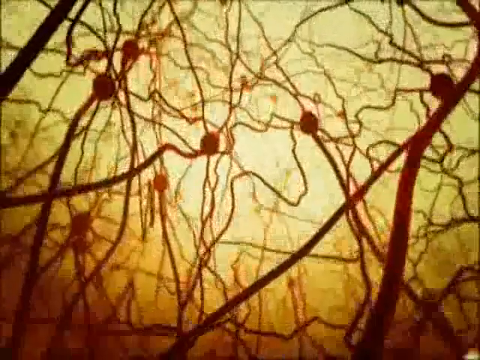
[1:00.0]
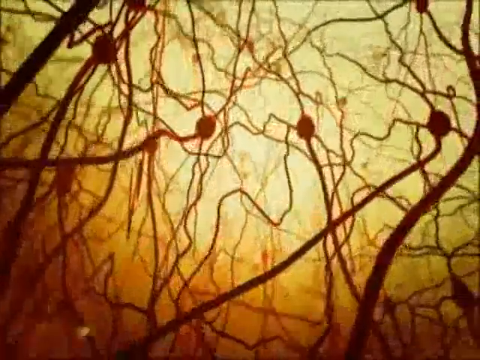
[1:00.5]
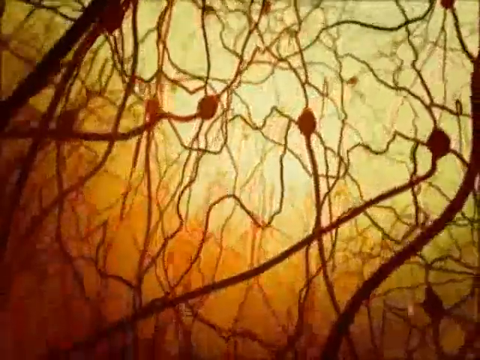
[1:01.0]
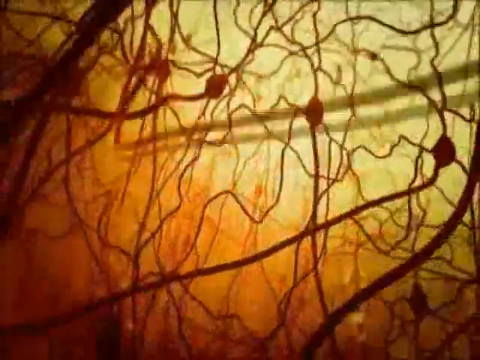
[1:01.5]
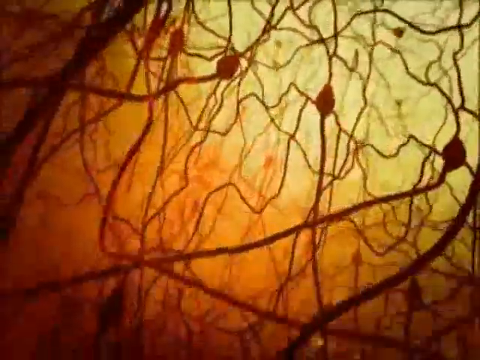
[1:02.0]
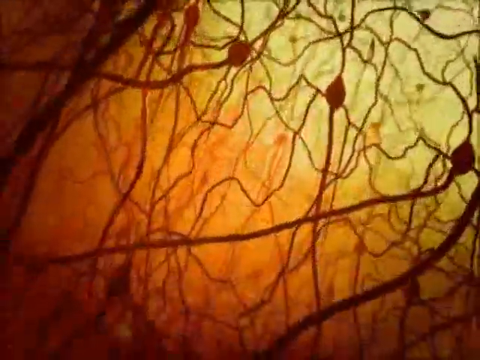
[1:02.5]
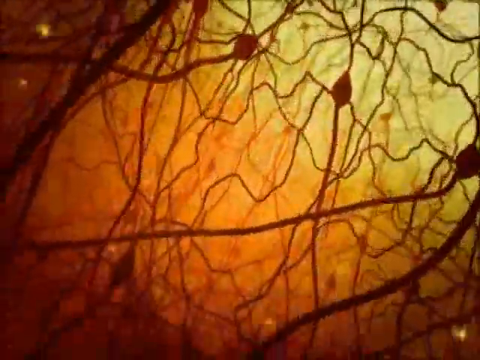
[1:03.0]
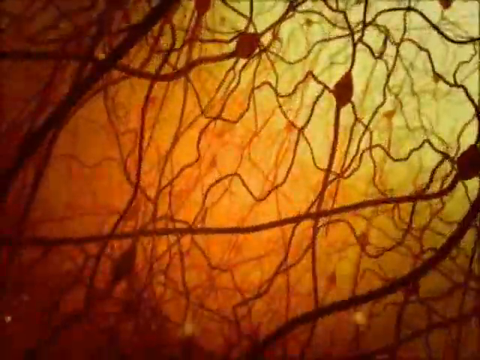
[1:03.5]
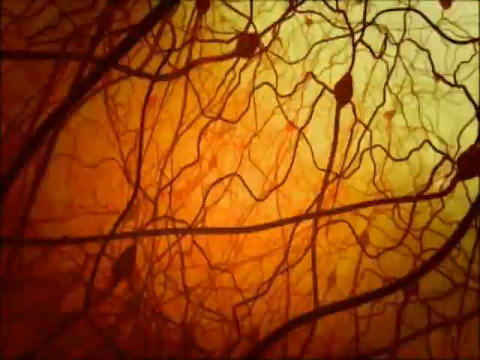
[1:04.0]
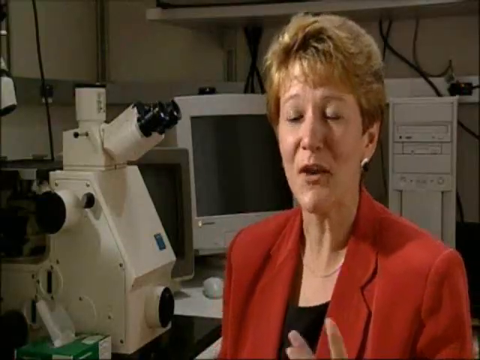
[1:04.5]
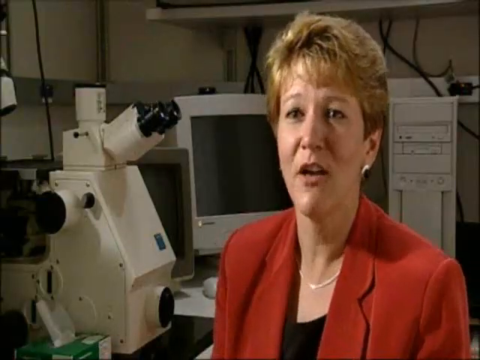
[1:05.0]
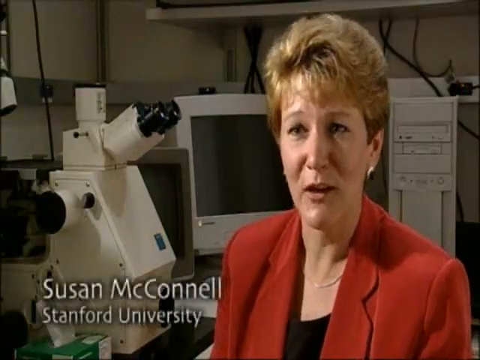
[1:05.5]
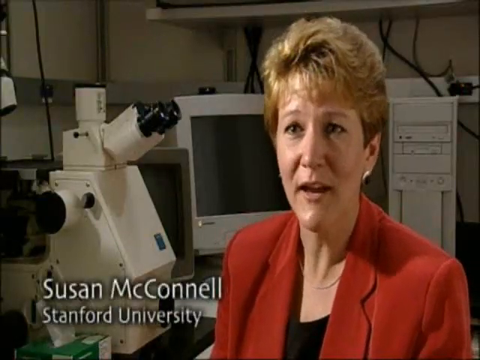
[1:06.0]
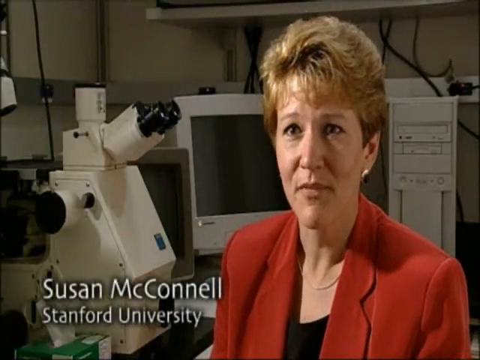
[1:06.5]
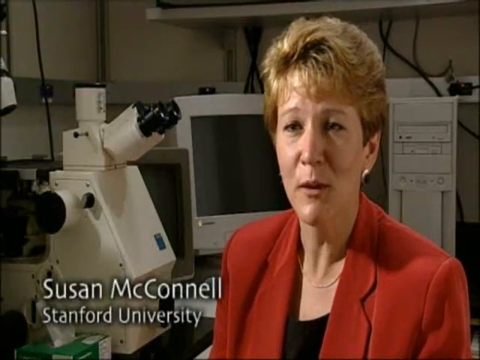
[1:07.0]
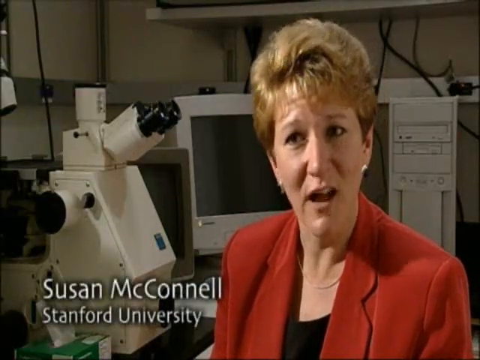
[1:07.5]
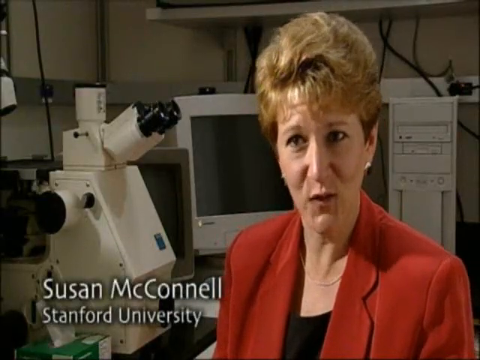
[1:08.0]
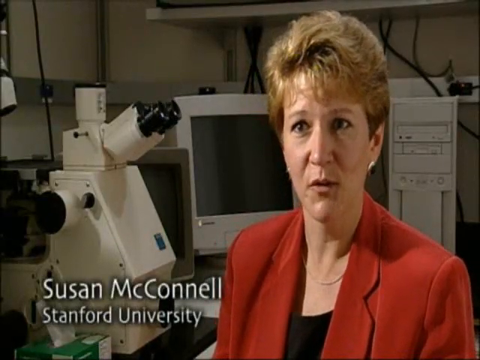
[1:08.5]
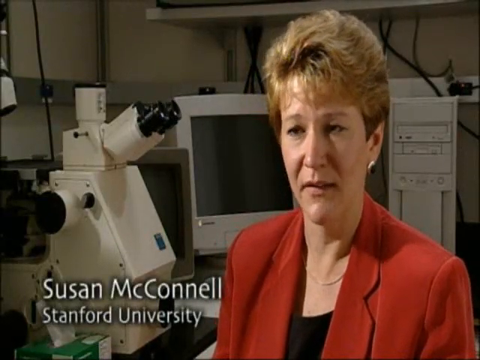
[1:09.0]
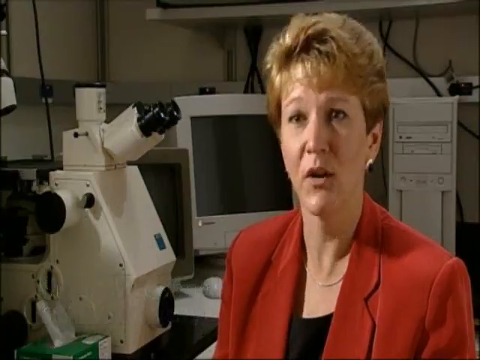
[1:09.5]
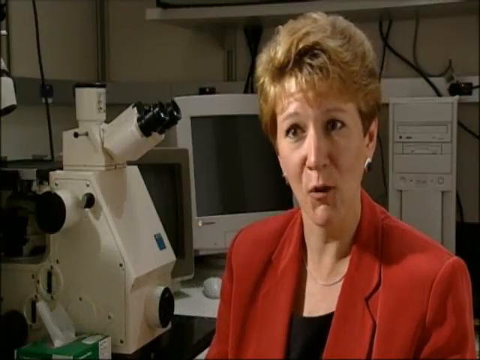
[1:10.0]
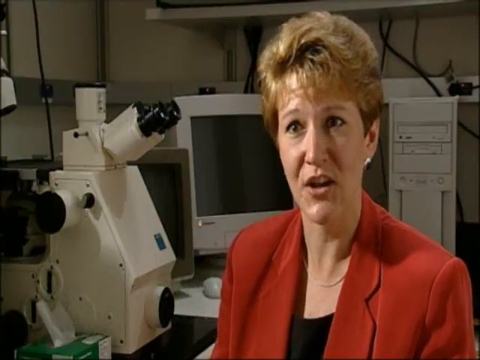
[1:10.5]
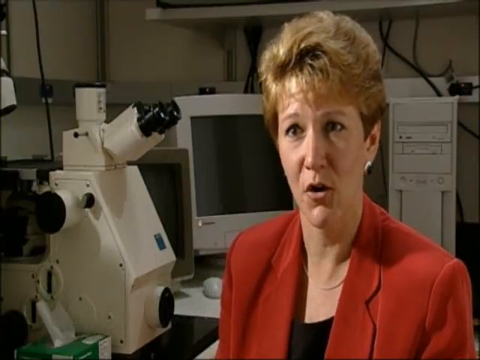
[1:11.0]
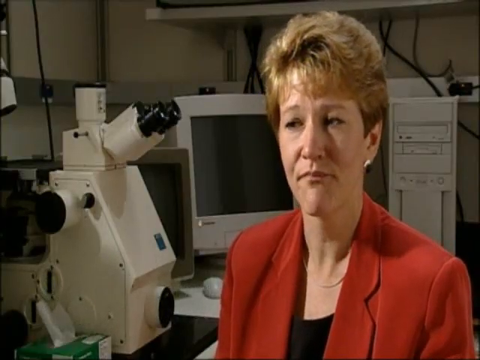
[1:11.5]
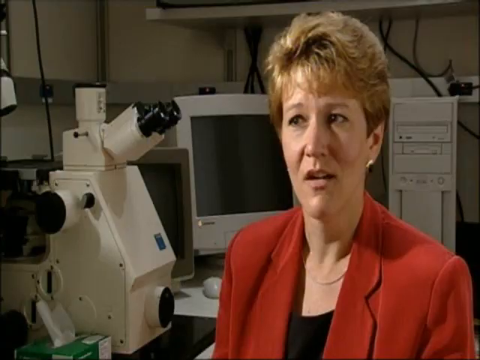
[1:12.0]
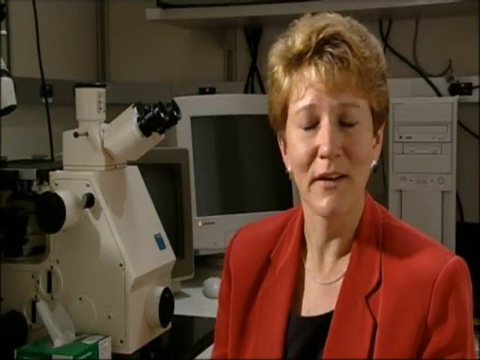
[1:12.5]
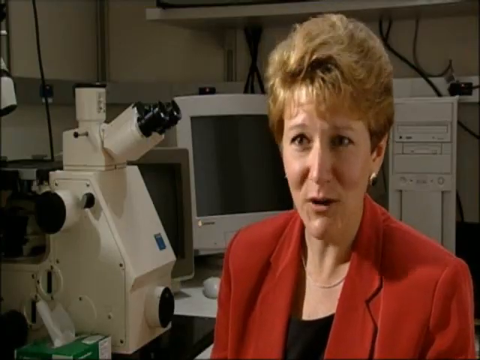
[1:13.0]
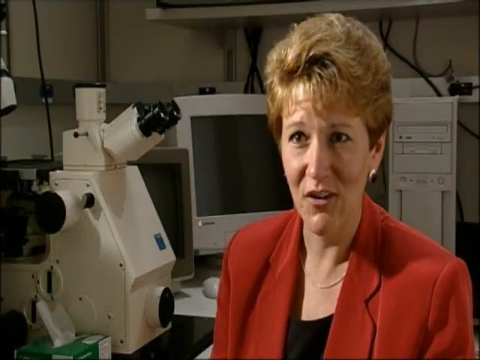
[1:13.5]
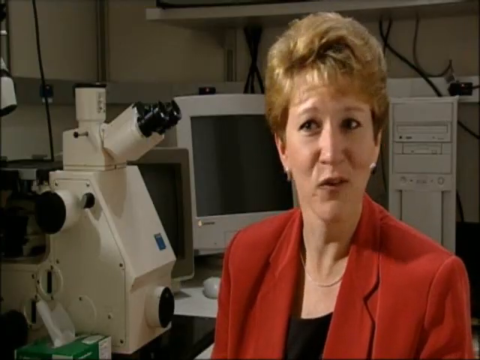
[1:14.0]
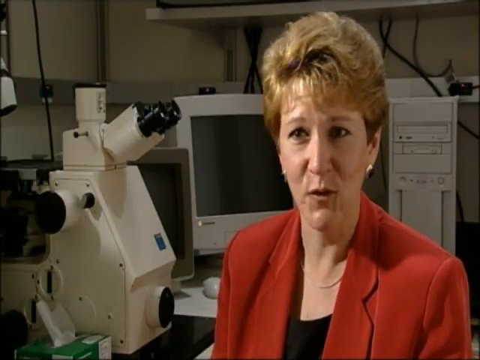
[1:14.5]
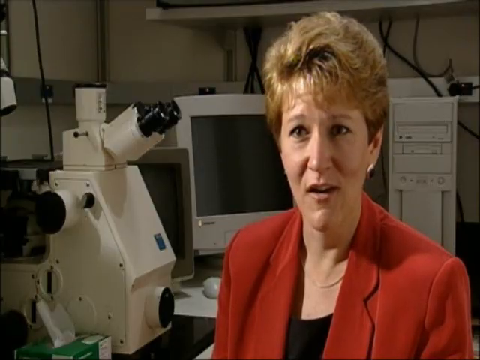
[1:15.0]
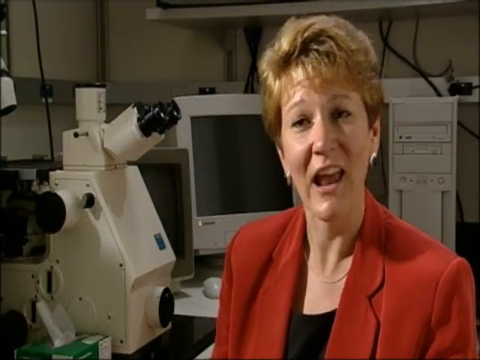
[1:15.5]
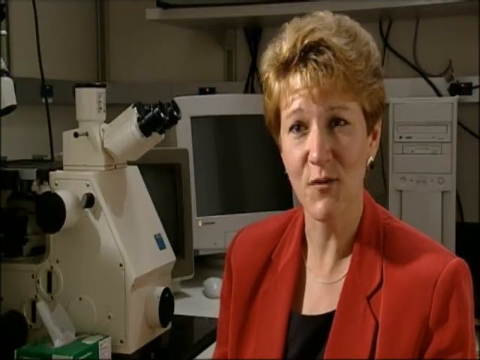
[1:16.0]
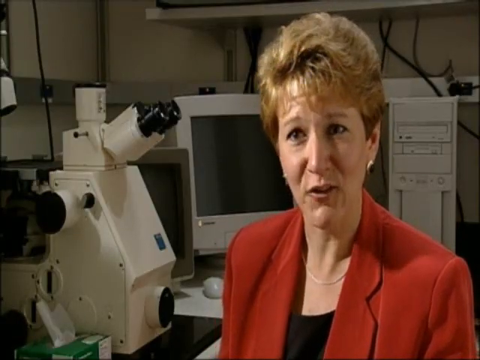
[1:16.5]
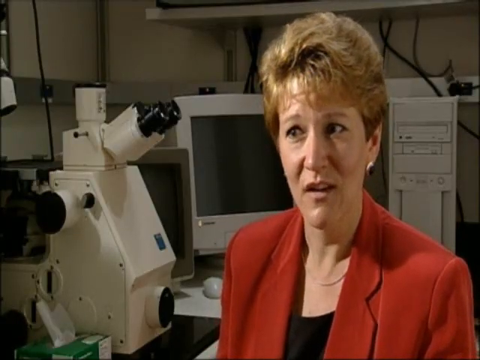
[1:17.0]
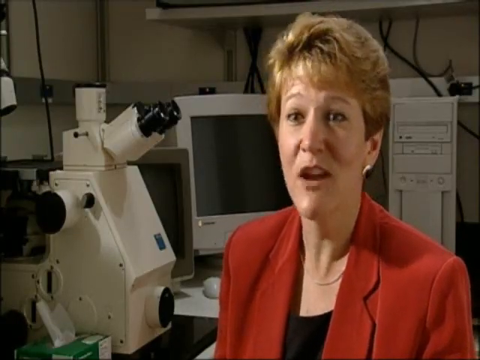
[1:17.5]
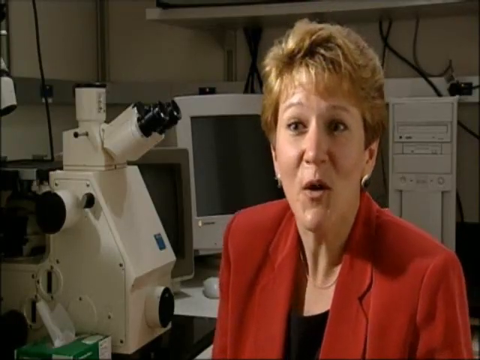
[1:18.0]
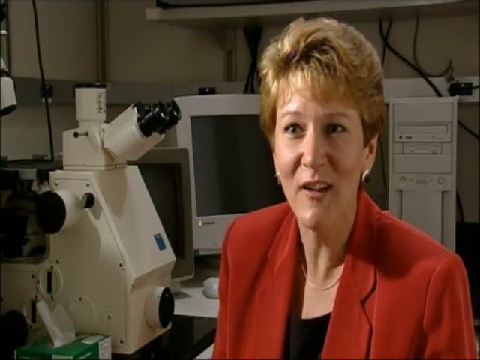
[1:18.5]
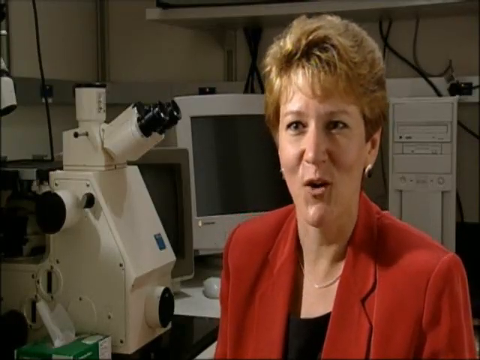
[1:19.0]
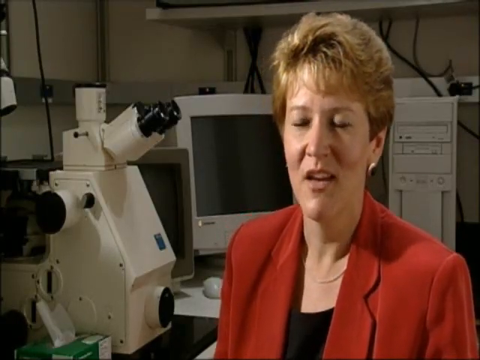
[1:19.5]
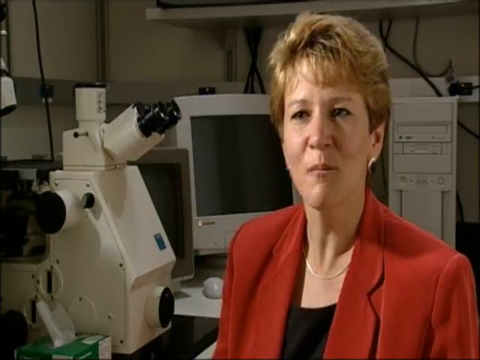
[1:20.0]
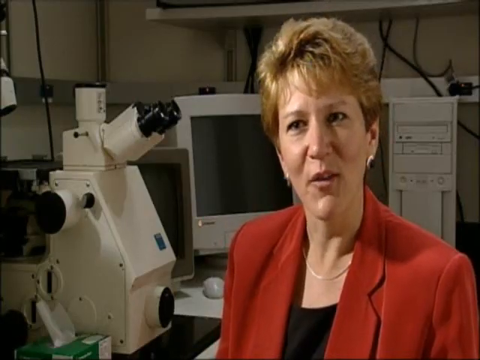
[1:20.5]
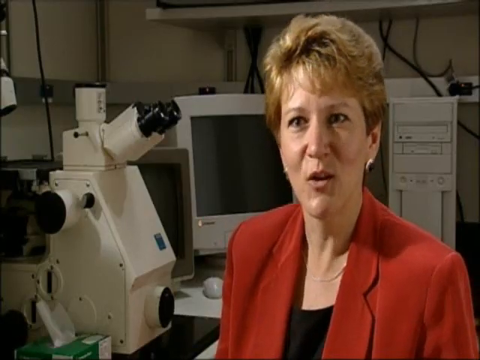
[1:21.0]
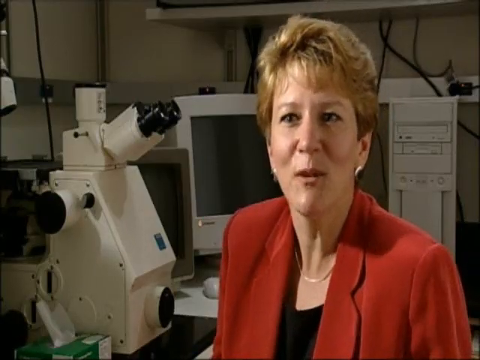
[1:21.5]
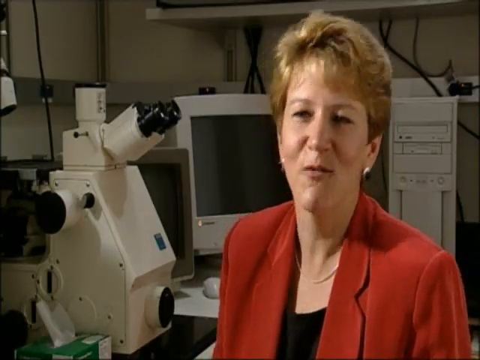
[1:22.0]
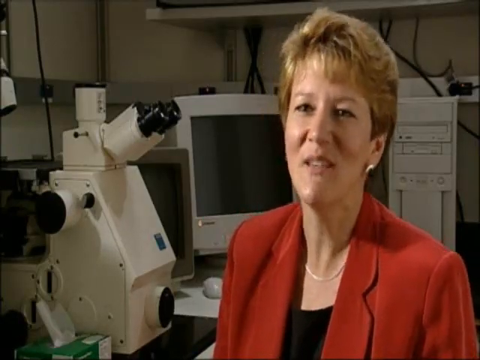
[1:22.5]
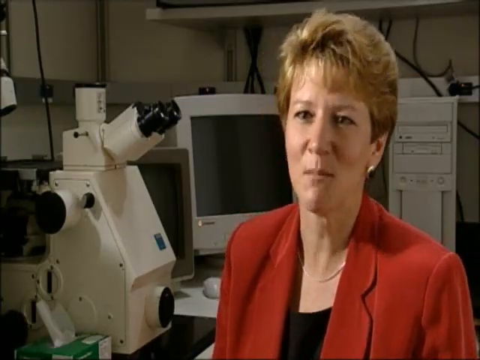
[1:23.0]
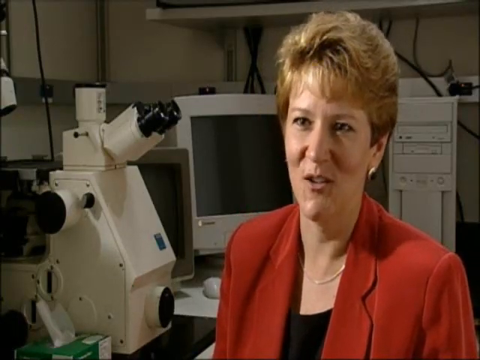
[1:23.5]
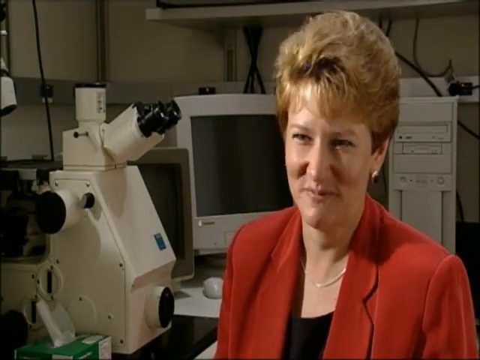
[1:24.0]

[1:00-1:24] The background behind the strands is now bright yellow, almost as if the camera has rotated to a different area. It looks as though everything is inside an orb with light coming in from one side: toward the upper right the color is a brightish yellow, and at the bottom it is a darker orange, reddish-brown. The video then cuts to a woman in a laboratory with a microscope off to her left. She wears a red jacket over a black blouse and has short blondish-brown hair, earrings, and a thin necklace. The footage appears to be very old, since the computer behind her is an old desktop with a CRT monitor next to it. The video identifies her as Susan McConnell from Stanford University.